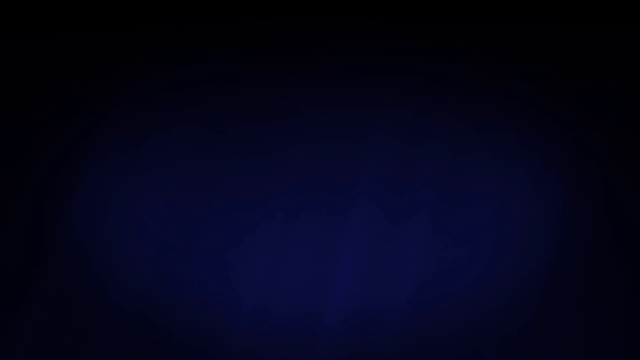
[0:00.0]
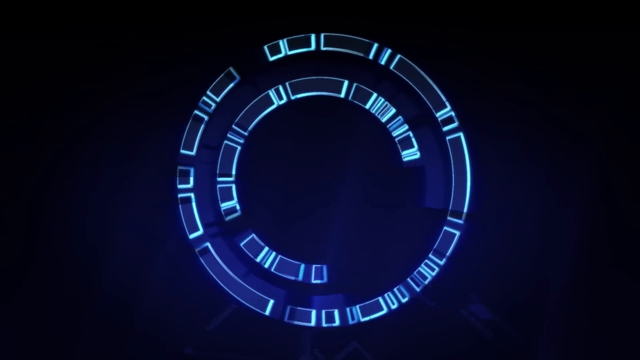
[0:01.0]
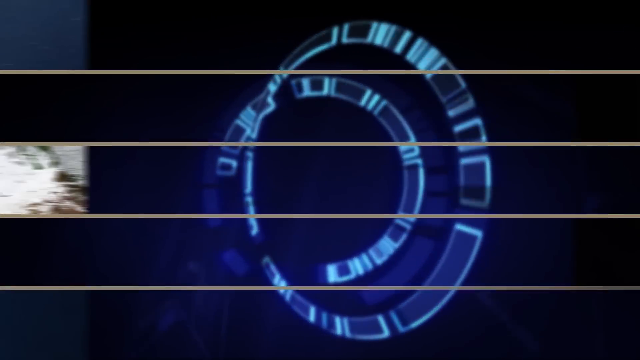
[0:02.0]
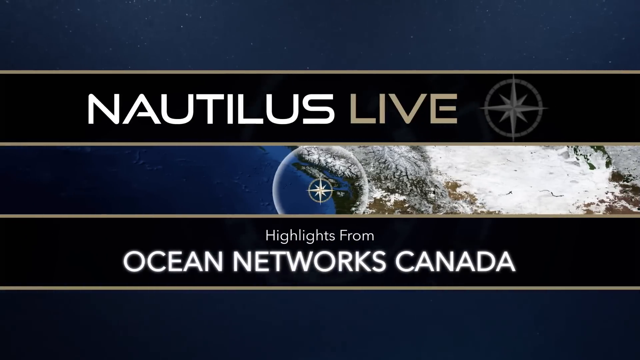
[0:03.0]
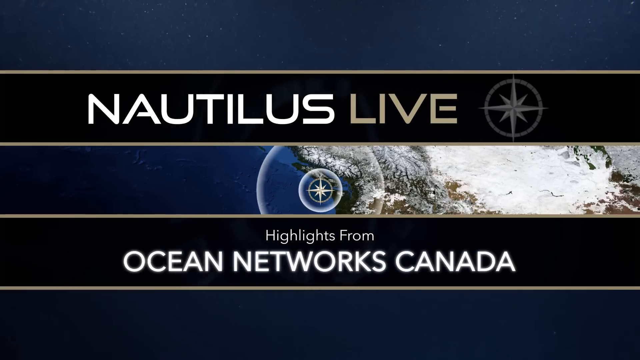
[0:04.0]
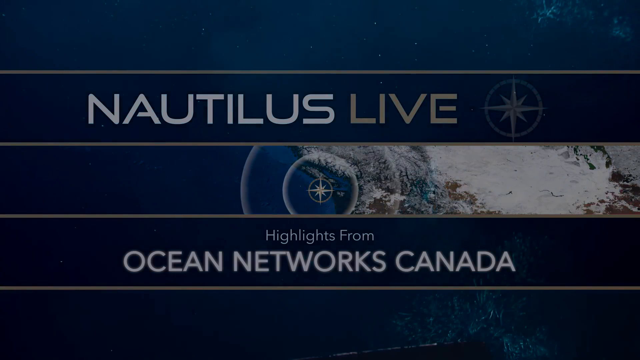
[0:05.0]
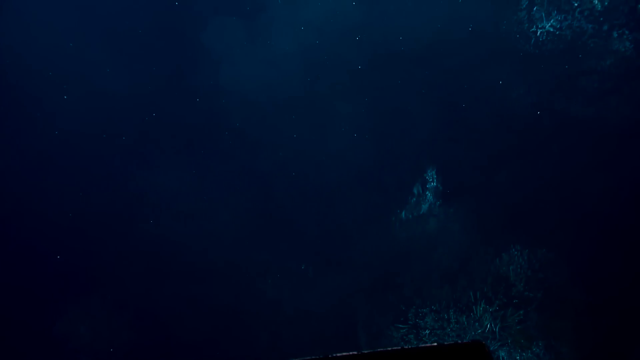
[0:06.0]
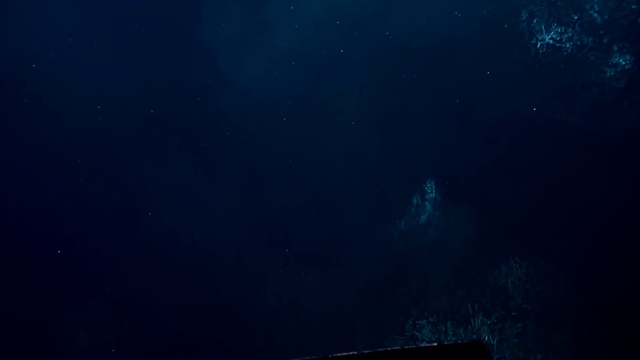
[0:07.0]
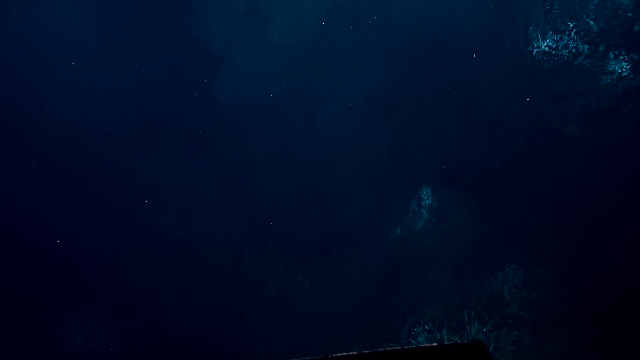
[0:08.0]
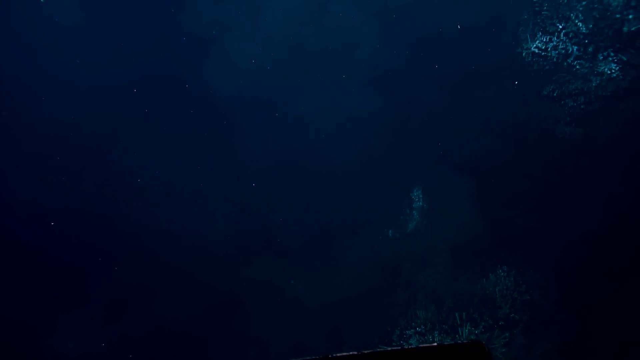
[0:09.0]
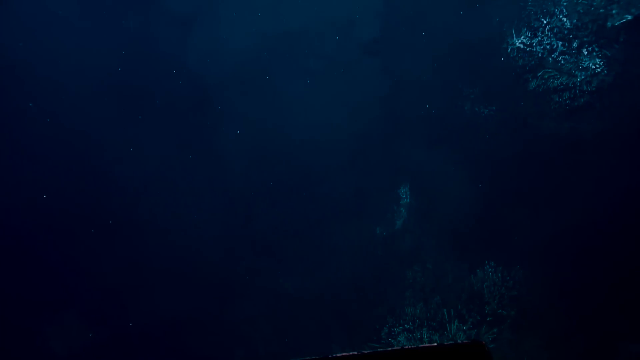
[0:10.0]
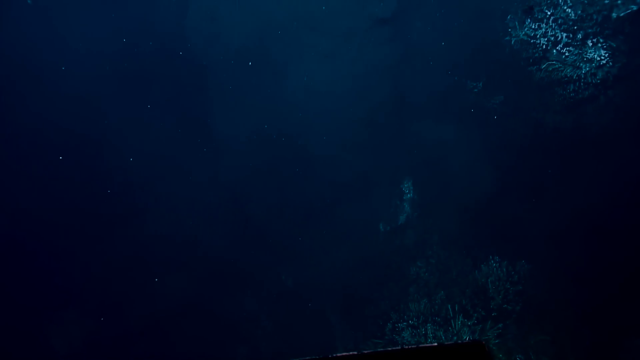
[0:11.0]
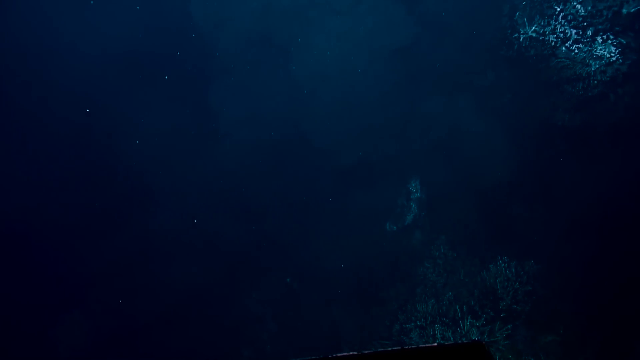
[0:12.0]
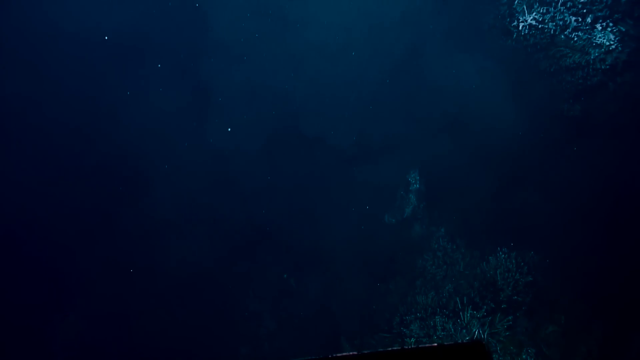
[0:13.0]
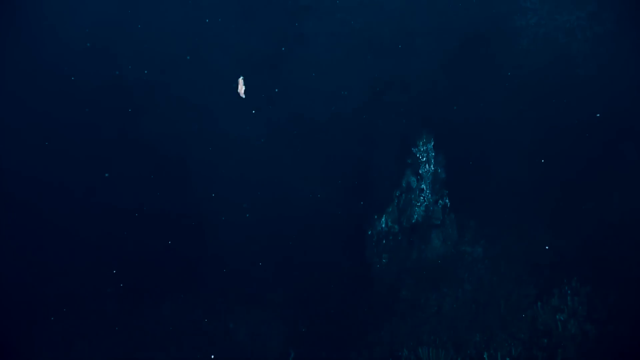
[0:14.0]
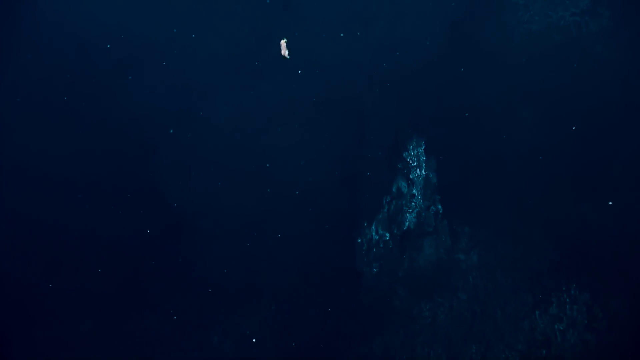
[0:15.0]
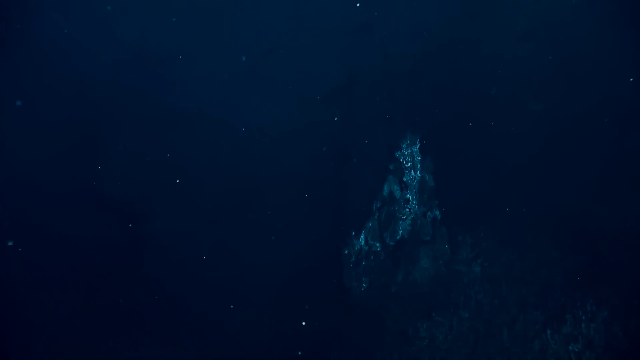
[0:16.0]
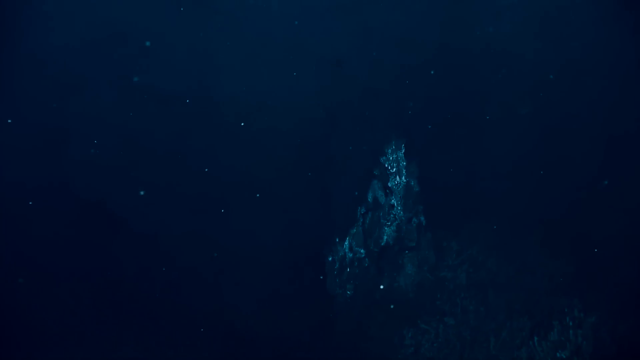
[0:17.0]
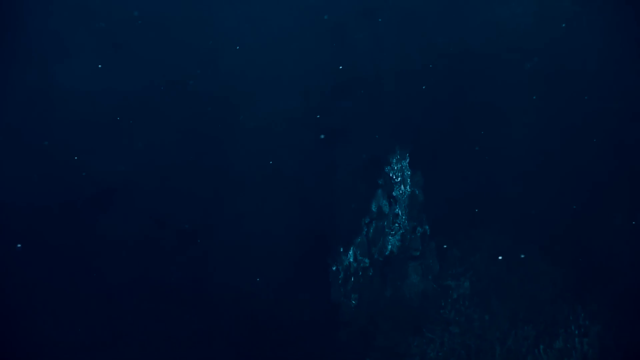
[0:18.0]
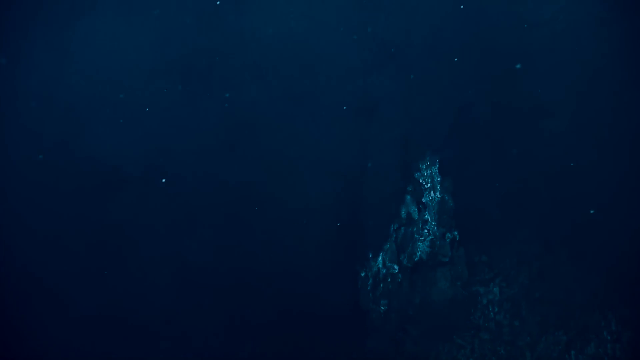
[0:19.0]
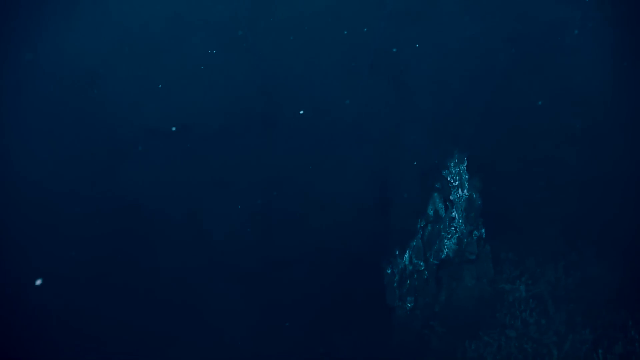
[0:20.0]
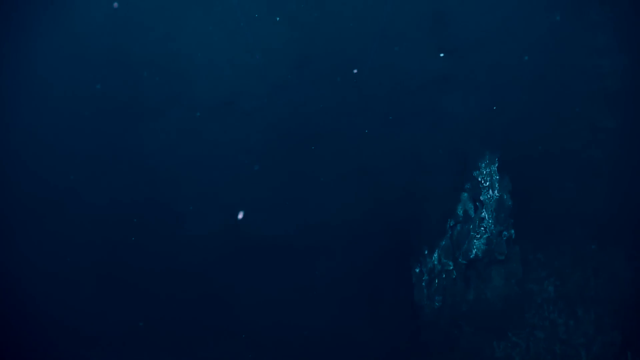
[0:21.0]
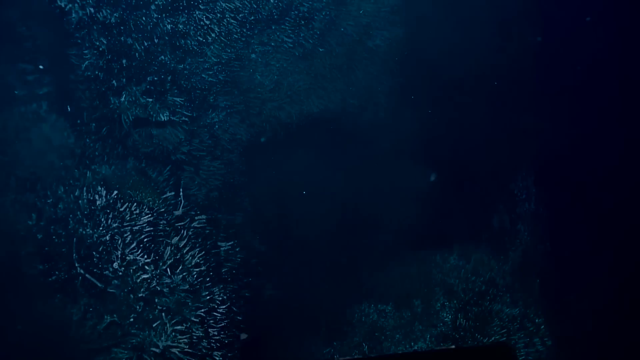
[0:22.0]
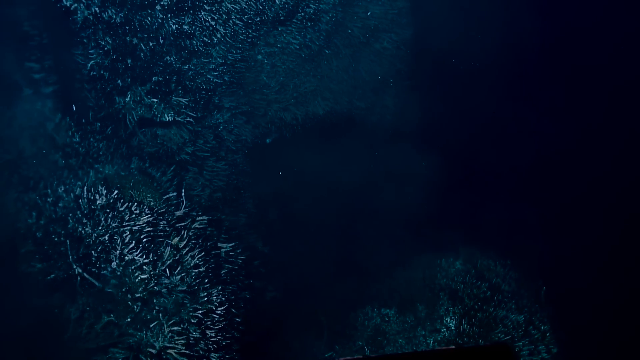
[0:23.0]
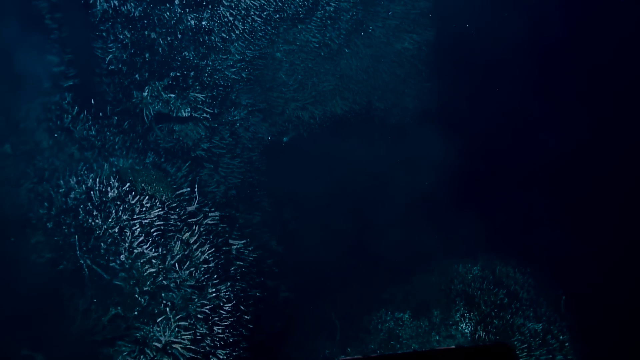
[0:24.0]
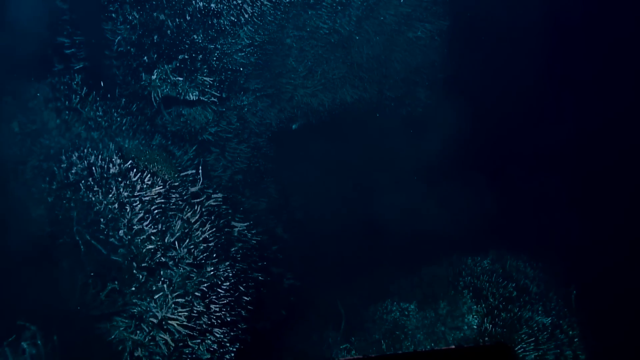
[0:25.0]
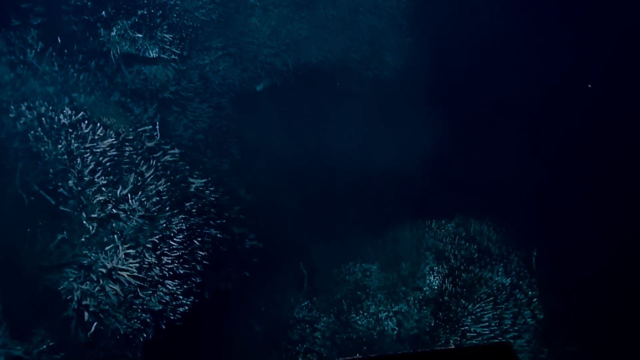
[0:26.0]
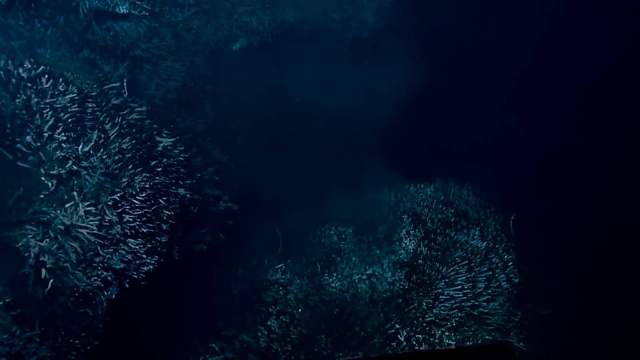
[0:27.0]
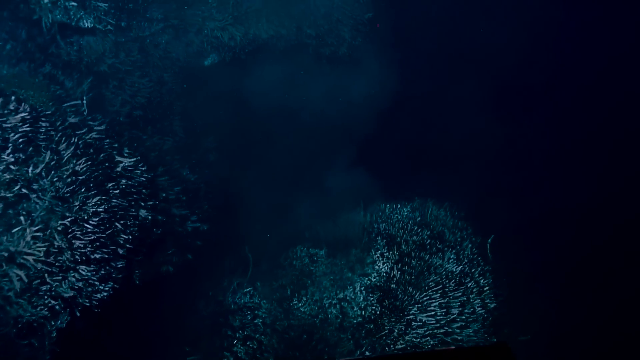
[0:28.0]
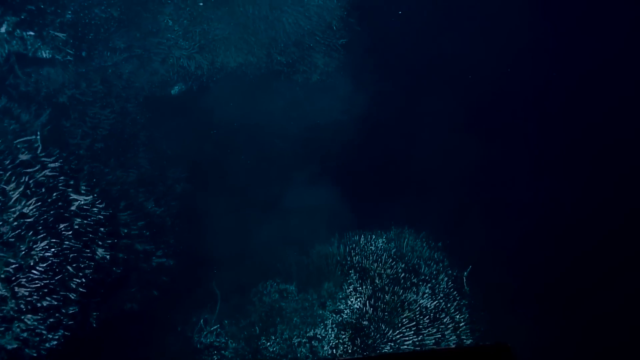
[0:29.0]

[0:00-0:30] The video opens with the words "Nautilus Live" and, next to them, a round symbol with a star in the middle. Just below is a picture of land and ocean, with another star in the middle, and underneath it is written "highlights from Ocean Networks Canada". The words are white and the background is blue and black. Then the bottom of the ocean appears. It is very dark blue, and the only things visible are moving underwater sea creatures that look like stars moving from left to right. The camera moves upwards and to the right as the creatures move up. The camera zooms in on what looks like a rock under the ocean, which looks a bit rusty and a little blue and brown, while the other tiny white objects keep moving up and to the right. Then what looks like coral reefs appear. The camera seems to move from up to down, then moves to the right, showing more coral under the ocean.